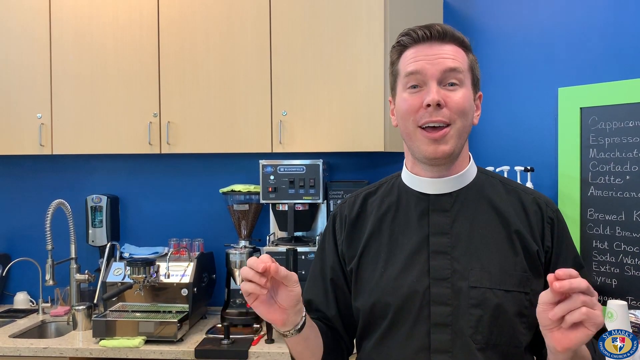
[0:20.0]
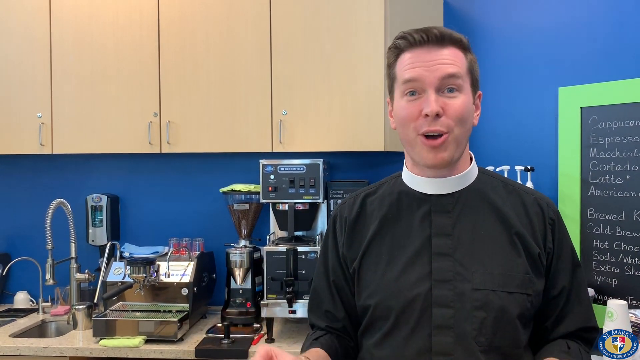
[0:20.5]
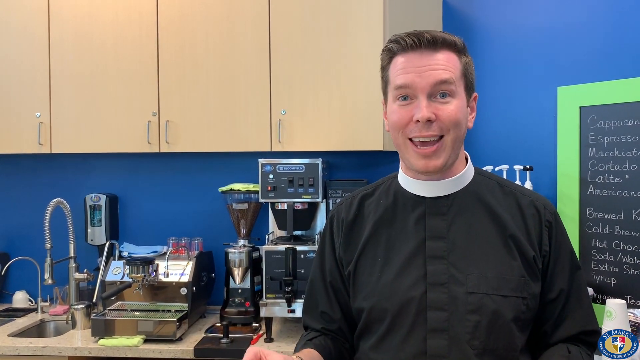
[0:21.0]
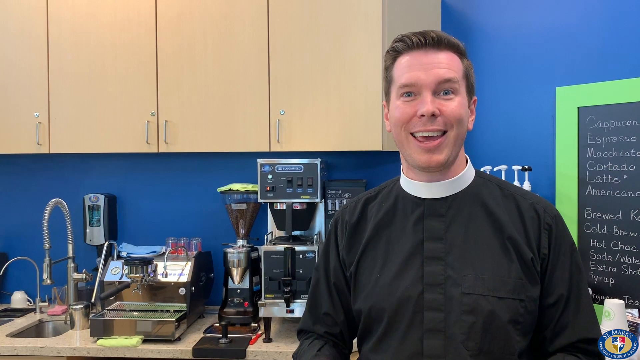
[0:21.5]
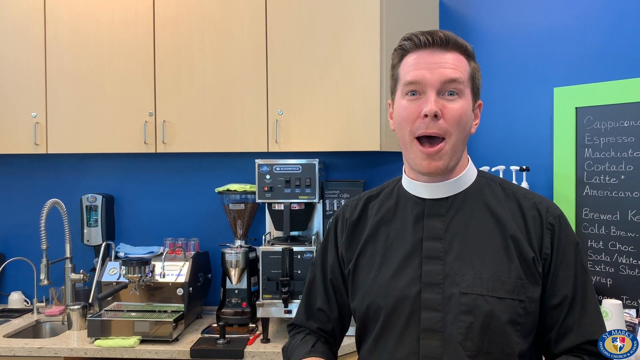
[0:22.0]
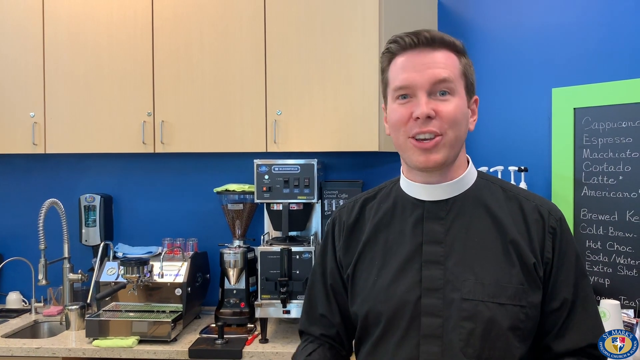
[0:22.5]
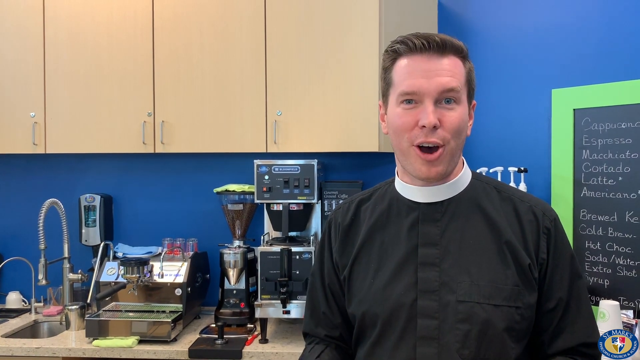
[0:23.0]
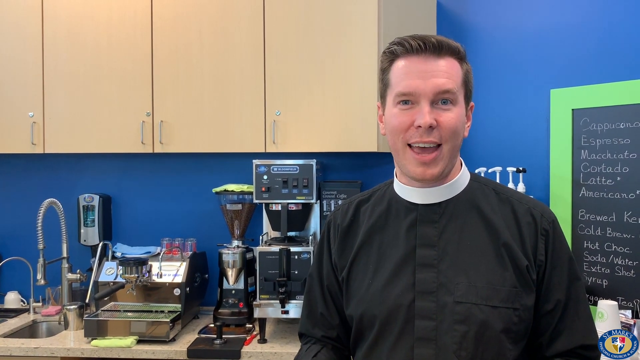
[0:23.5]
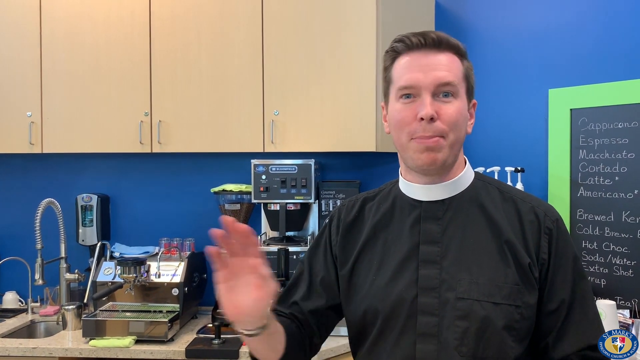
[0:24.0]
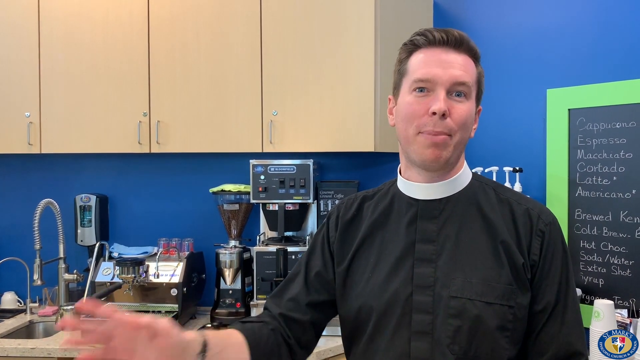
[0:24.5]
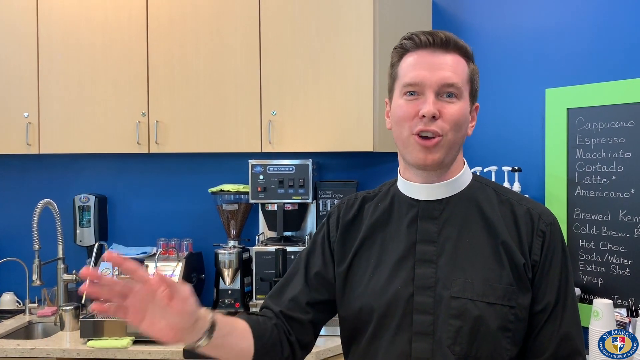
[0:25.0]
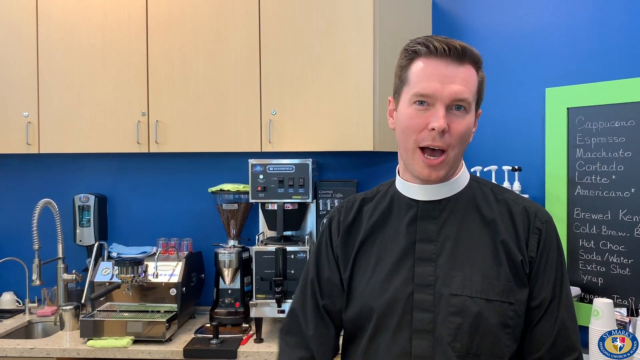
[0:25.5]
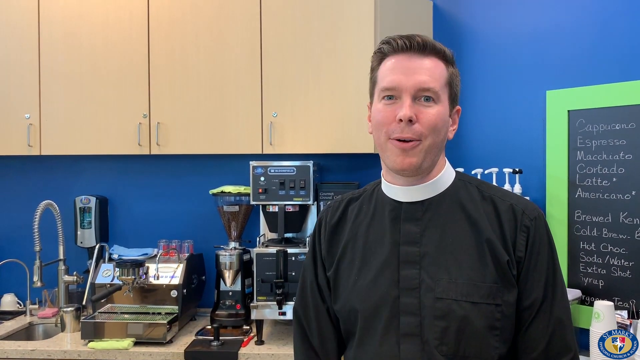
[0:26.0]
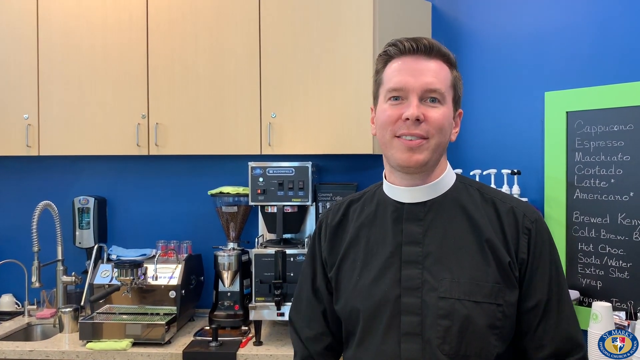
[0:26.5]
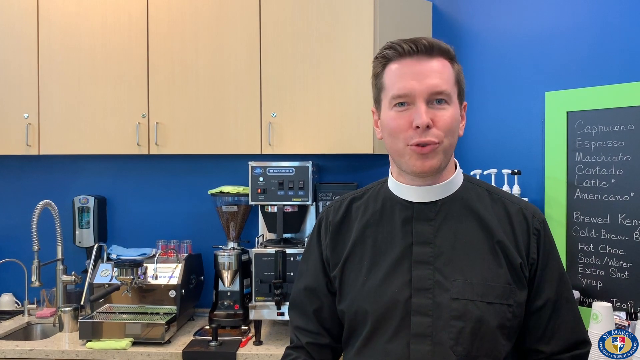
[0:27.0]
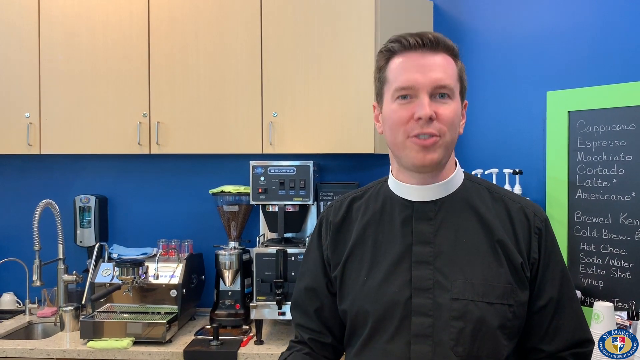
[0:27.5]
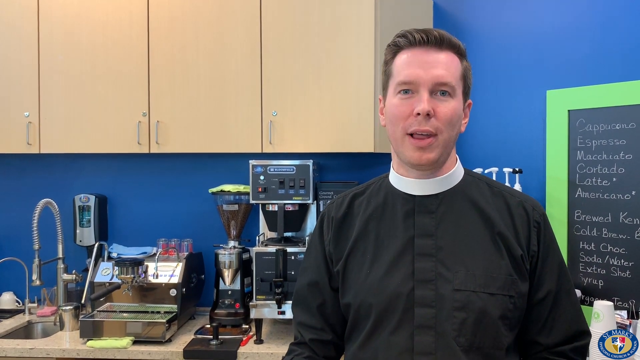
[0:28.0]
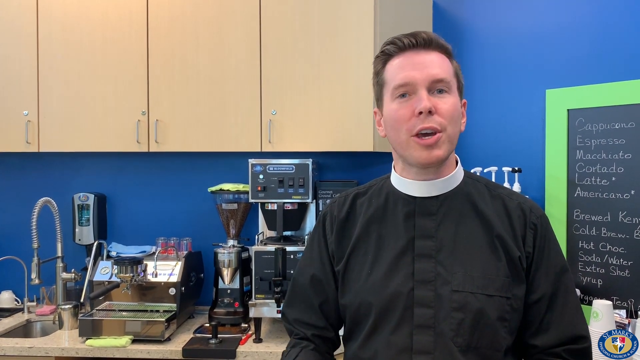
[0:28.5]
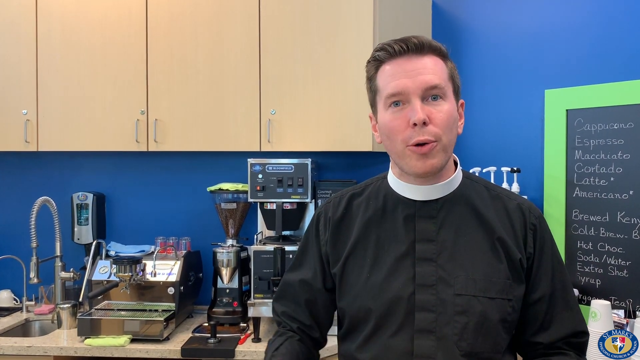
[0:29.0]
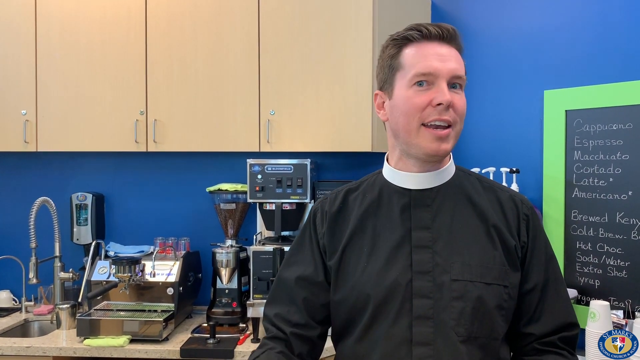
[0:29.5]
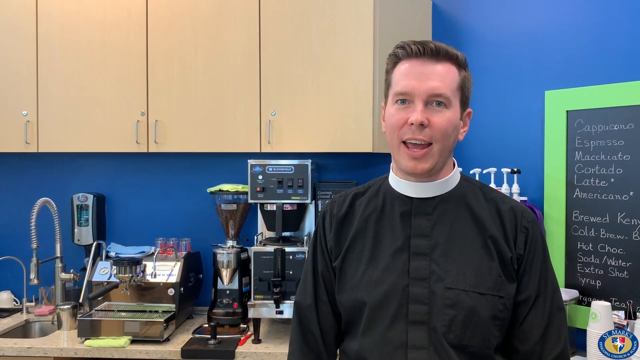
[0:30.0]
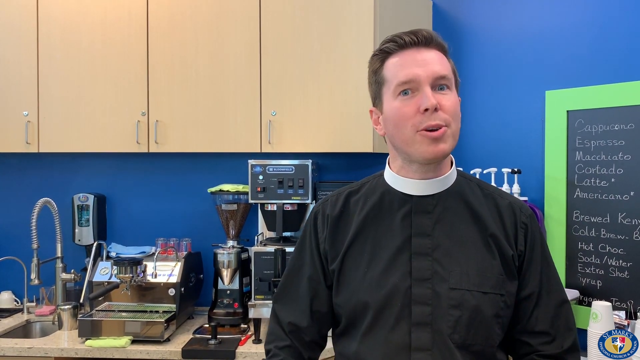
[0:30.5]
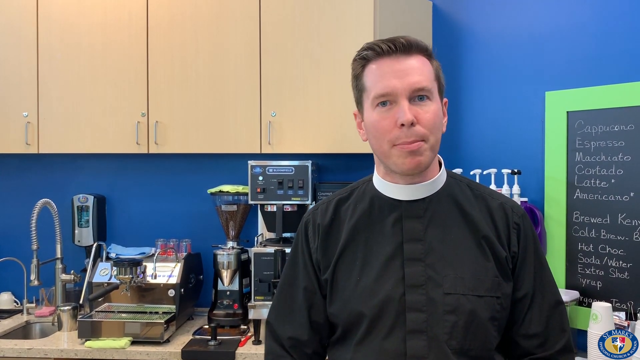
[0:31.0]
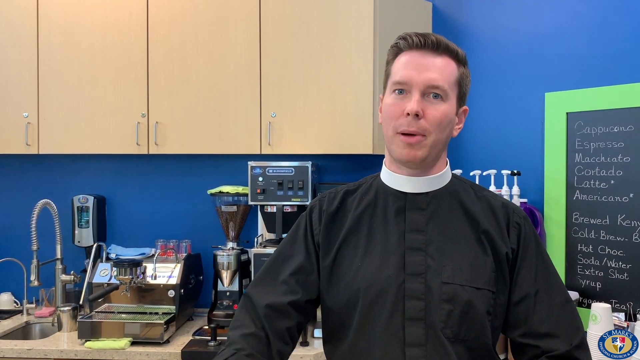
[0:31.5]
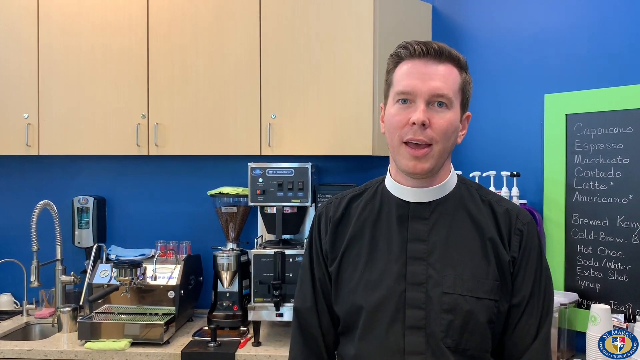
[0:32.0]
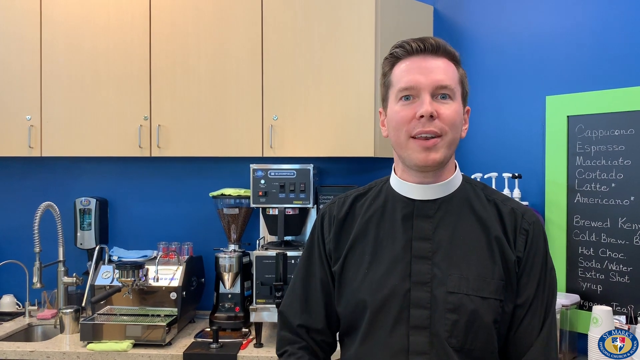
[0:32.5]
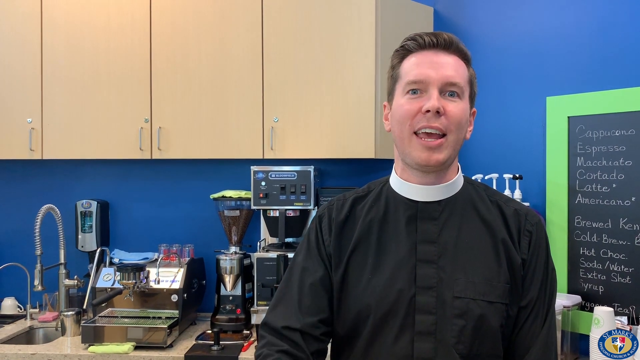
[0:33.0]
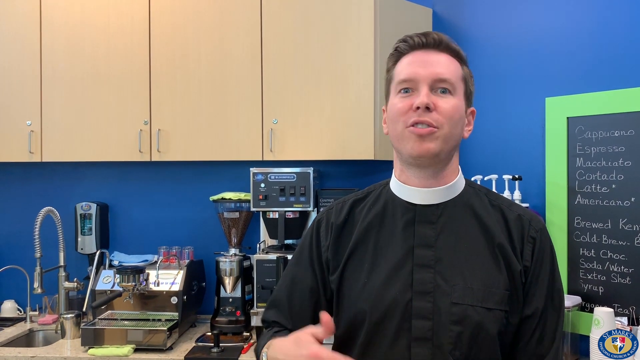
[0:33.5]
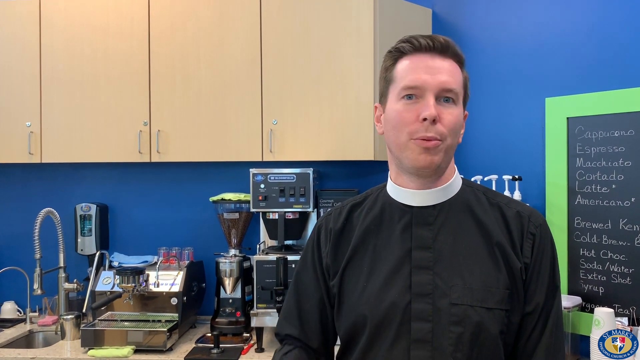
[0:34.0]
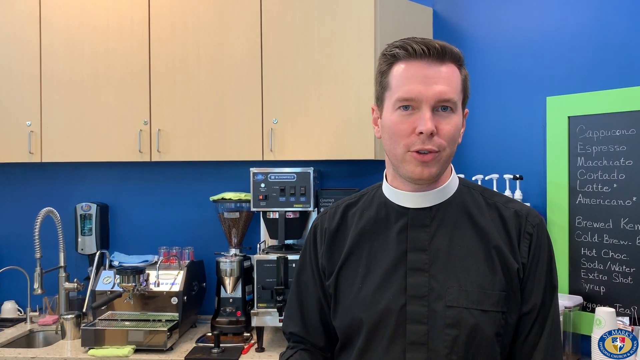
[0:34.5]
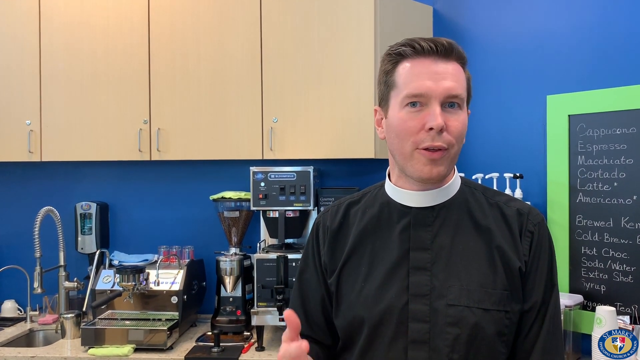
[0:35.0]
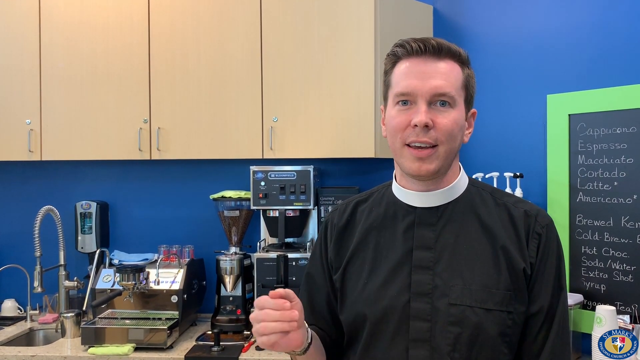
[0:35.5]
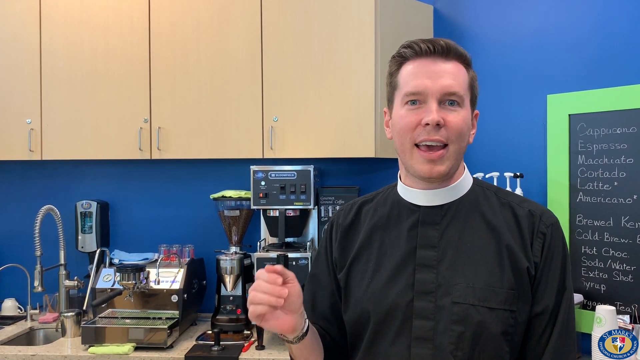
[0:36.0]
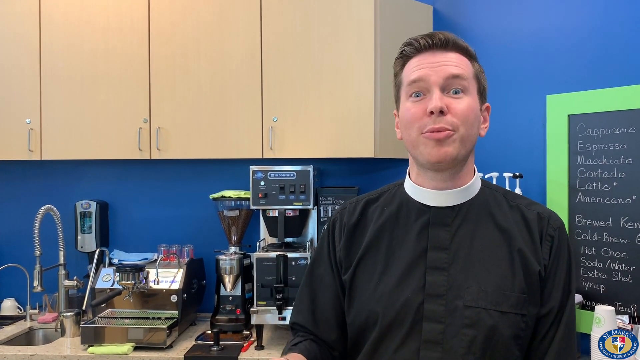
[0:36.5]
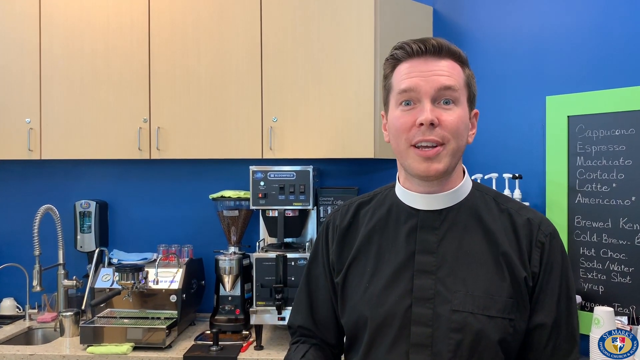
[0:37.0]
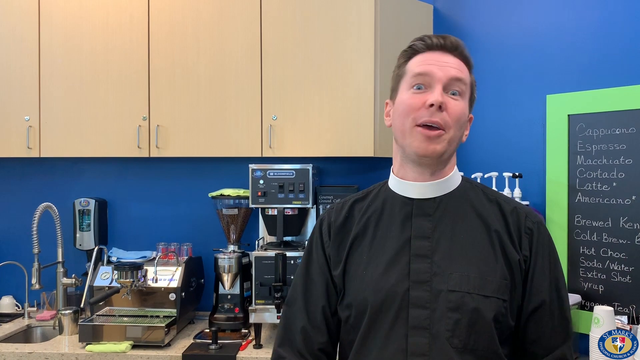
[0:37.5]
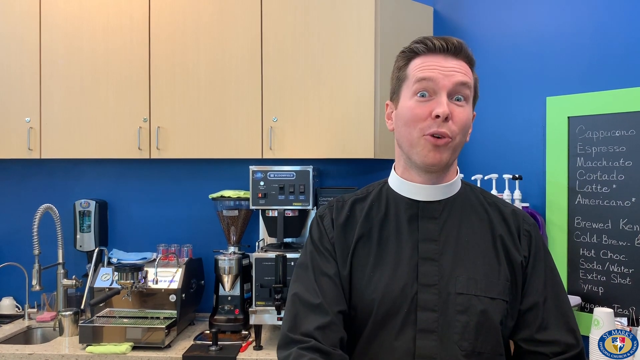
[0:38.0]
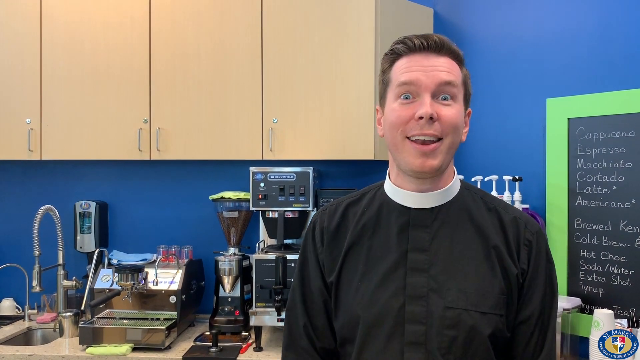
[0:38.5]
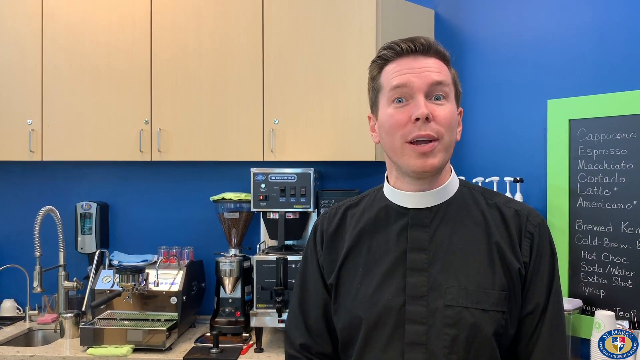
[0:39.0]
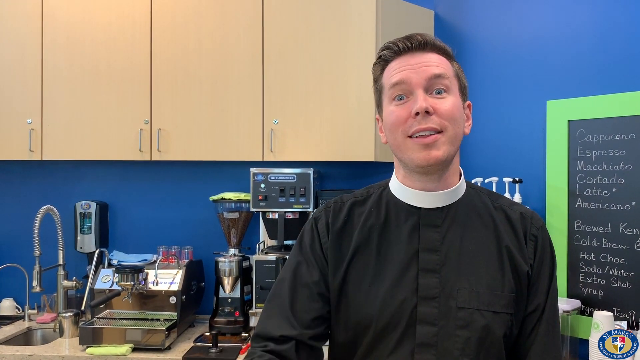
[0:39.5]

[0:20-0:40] The Reverend continues the best coffee segment, apparently reading off a teleprompter. Behind him is a chalkboard with a green background listing items: cappuccino, espresso, macchiato, cortado, latte, americano, brewed Kenya coffee, cold brew, hot chocolate, soda water, extra shot, syrup and, apparently, organic tea. A stack of plastic cups is turned upside down. He is very expressive, moving his hands around and raising his eyebrows, and looks engaged and happy.